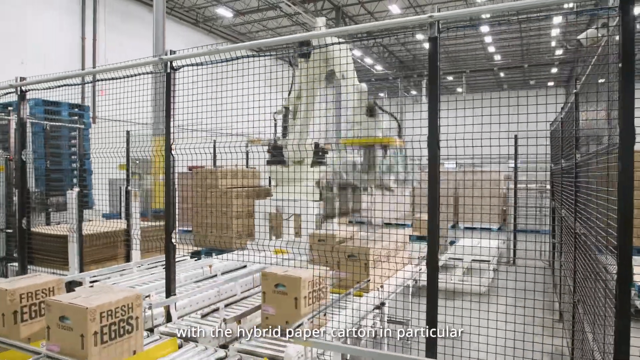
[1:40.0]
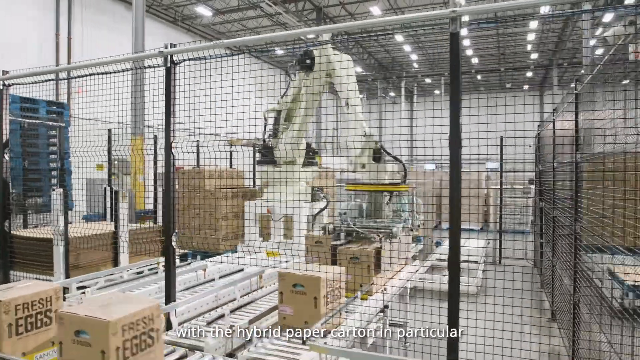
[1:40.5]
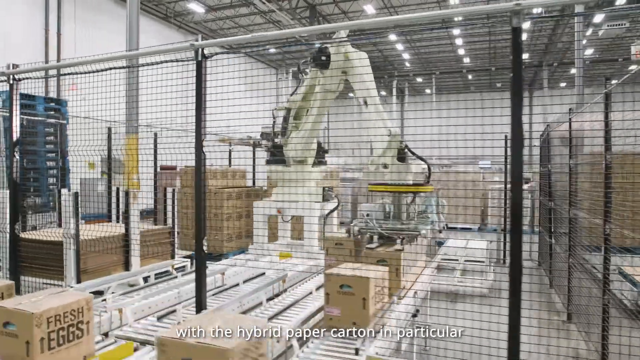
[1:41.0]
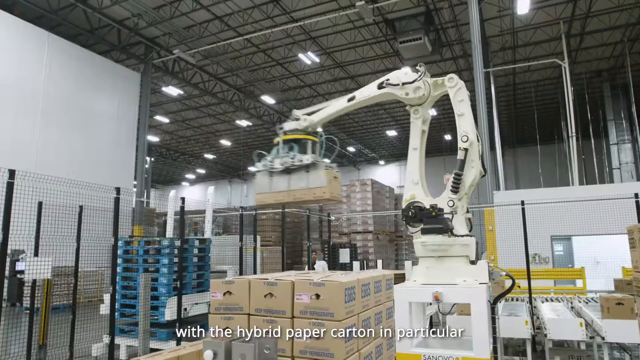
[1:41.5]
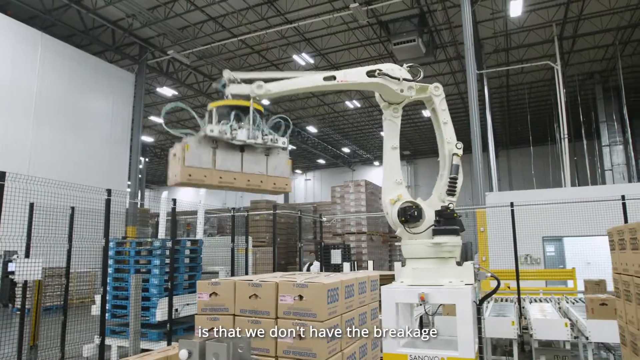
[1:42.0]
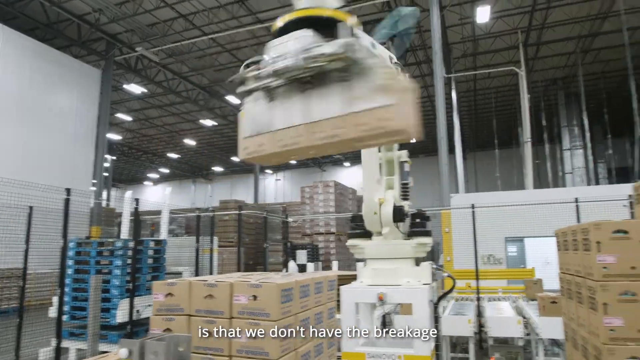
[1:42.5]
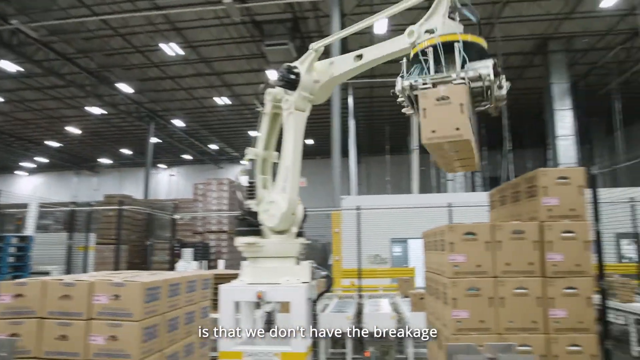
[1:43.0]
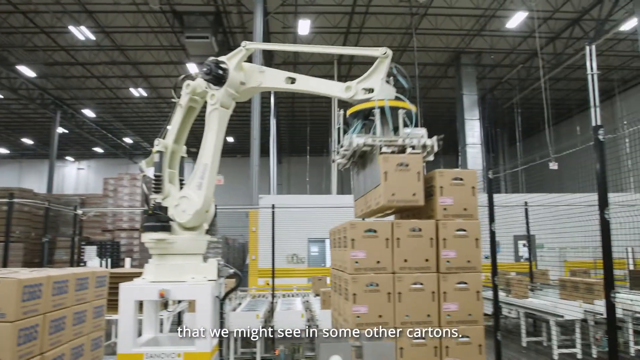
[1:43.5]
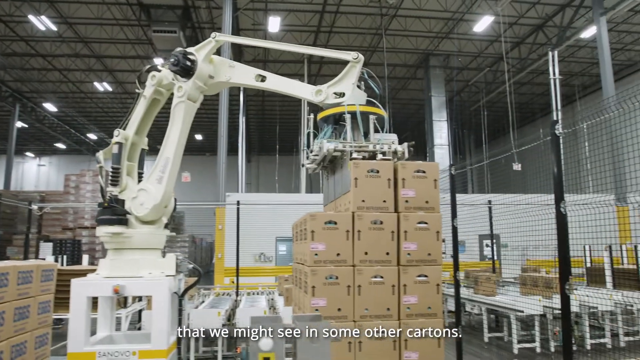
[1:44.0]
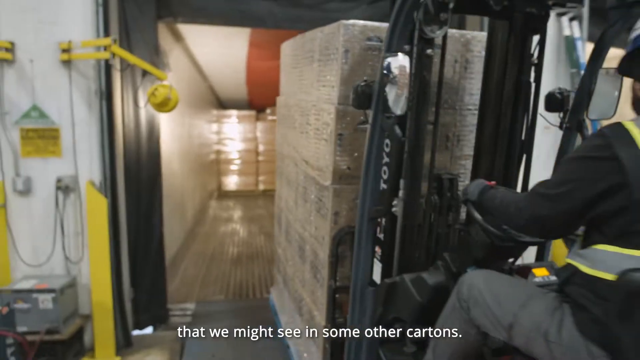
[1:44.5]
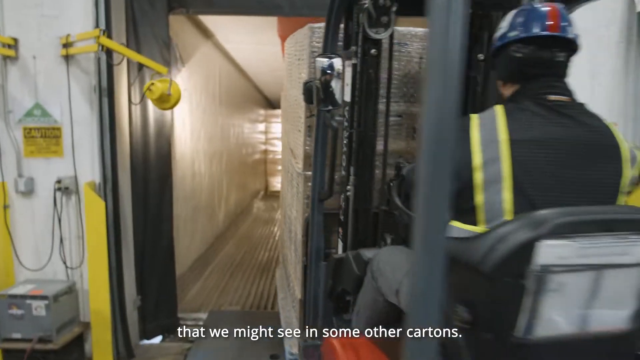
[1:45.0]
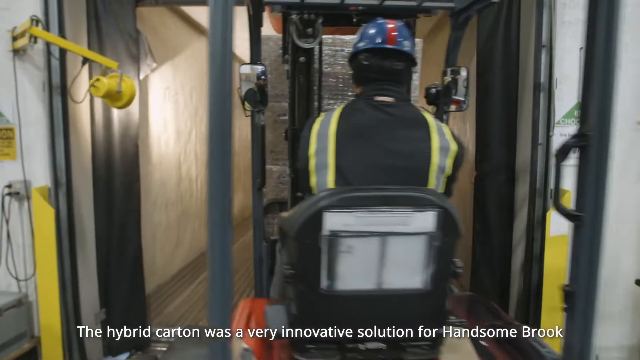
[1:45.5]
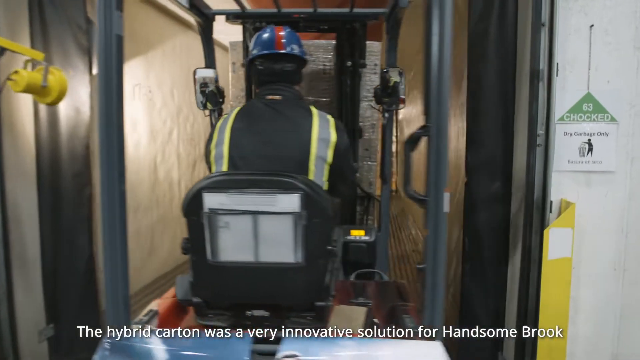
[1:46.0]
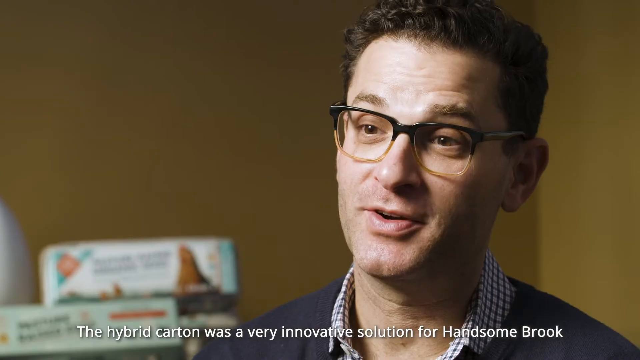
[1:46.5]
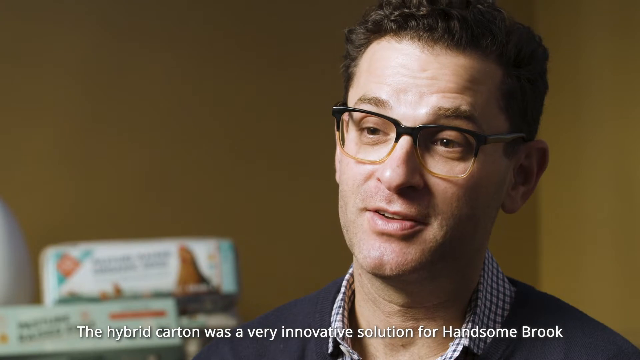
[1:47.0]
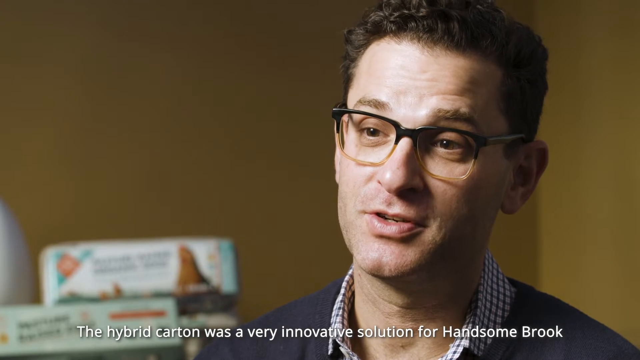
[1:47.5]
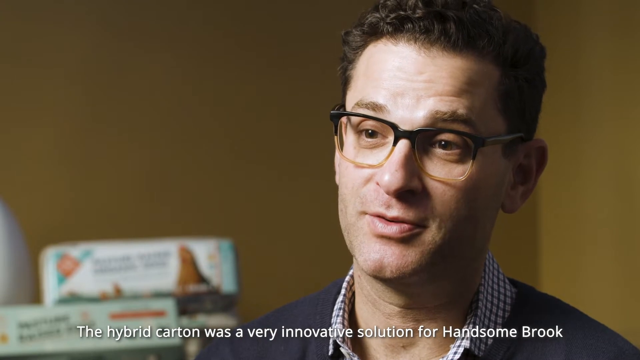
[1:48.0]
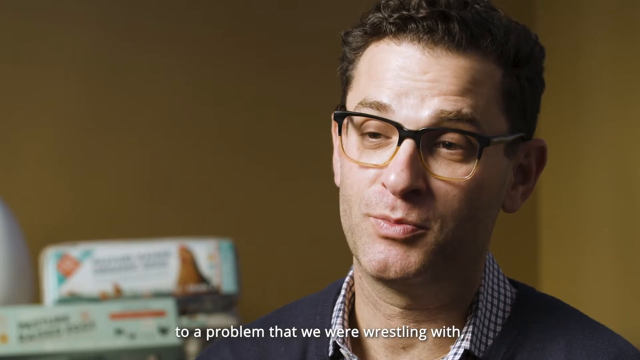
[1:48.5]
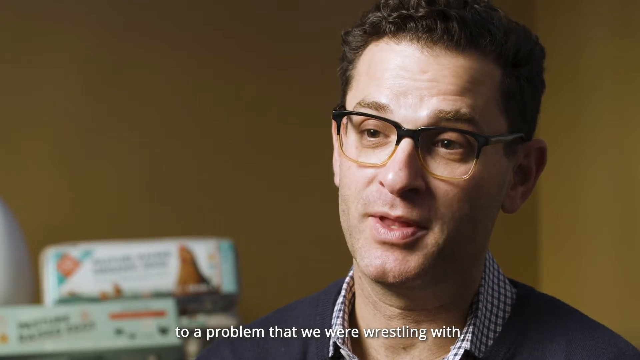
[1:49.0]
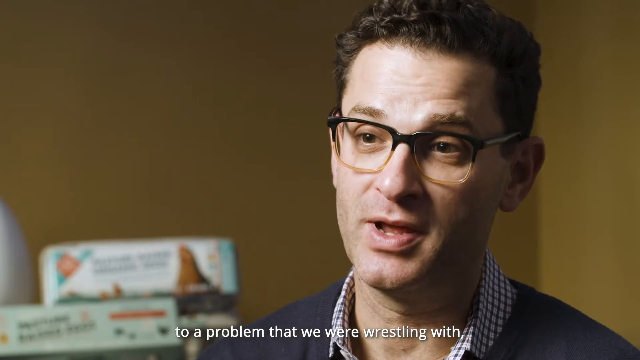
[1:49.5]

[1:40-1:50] Captions read: "with the hybrid paper carton in particular, is that we don't have the breakage that we might see in some other cartons. The hybrid carton was a very innovative solution for Handsome Brook to a problem that we were wrestling with." Eggs in large cardboard boxes are moved around the factory by robots from one stack to another. Lots of boxes of eggs are piled up on a forklift truck being driven down a corridor, before the video cuts back to the interviewee.